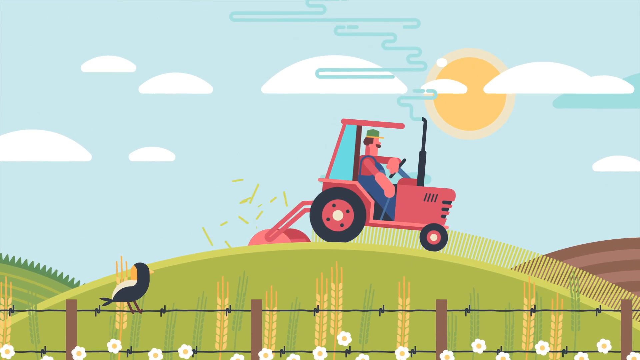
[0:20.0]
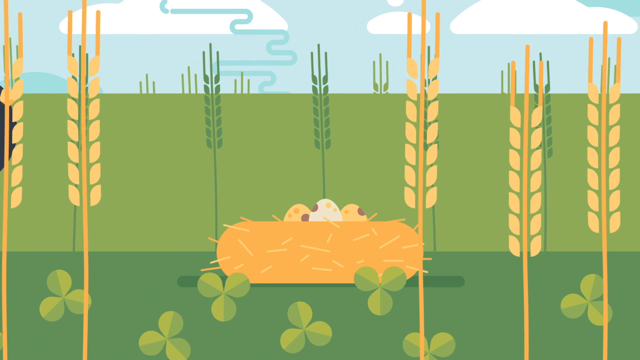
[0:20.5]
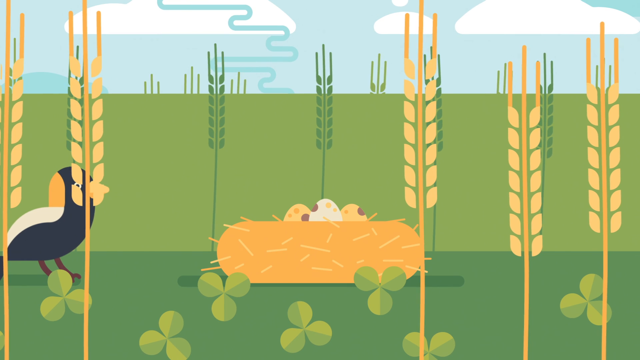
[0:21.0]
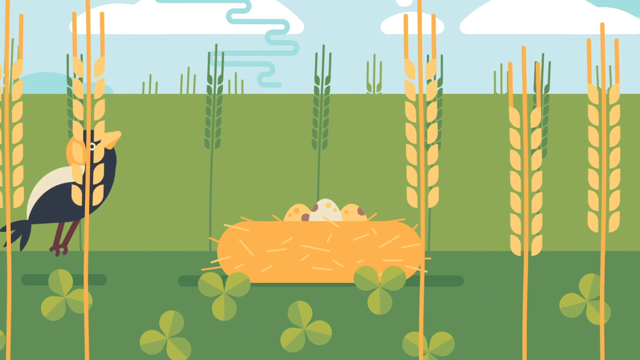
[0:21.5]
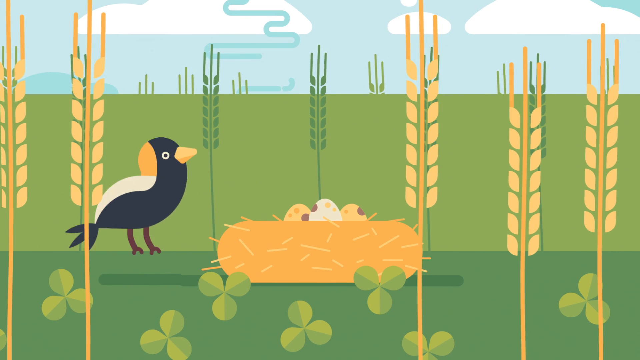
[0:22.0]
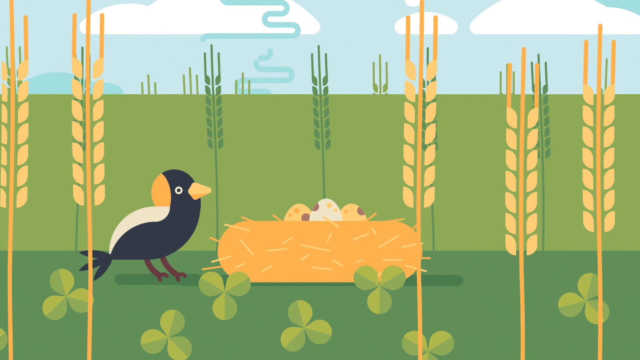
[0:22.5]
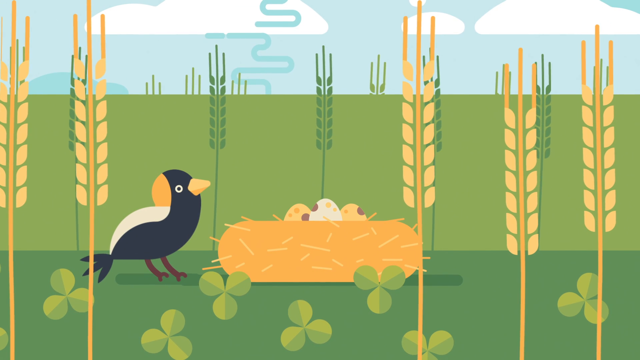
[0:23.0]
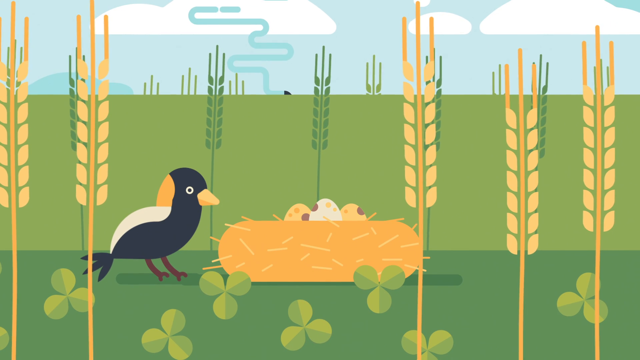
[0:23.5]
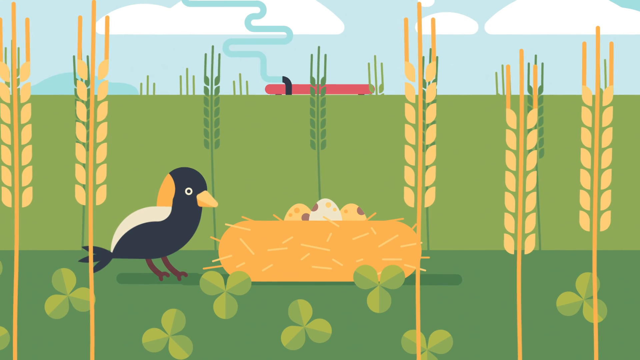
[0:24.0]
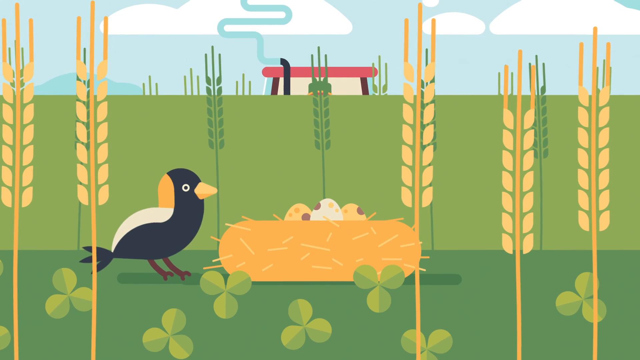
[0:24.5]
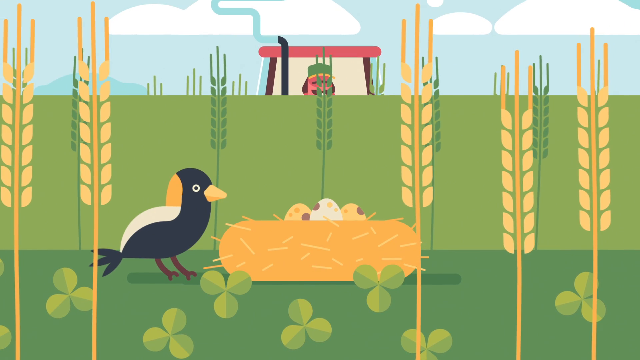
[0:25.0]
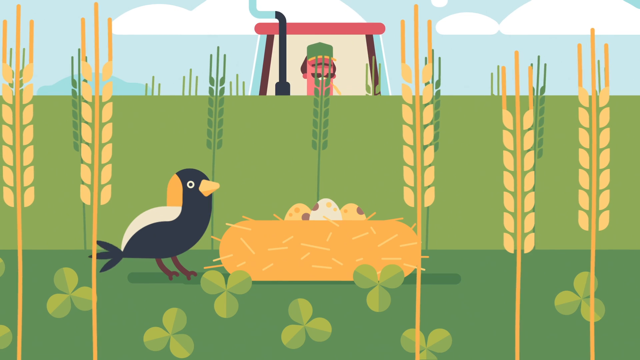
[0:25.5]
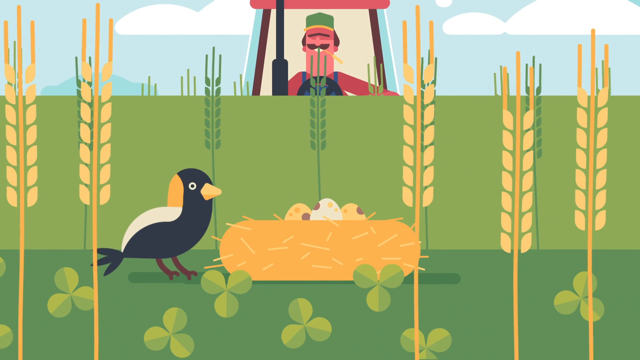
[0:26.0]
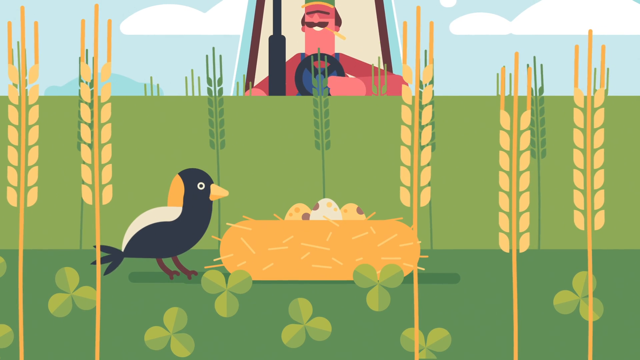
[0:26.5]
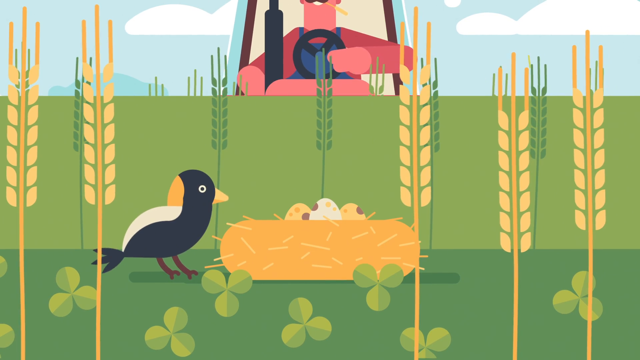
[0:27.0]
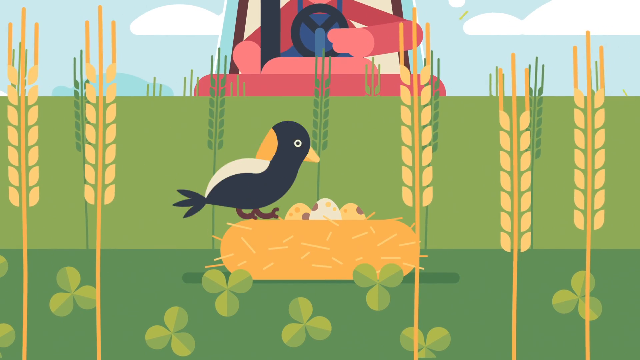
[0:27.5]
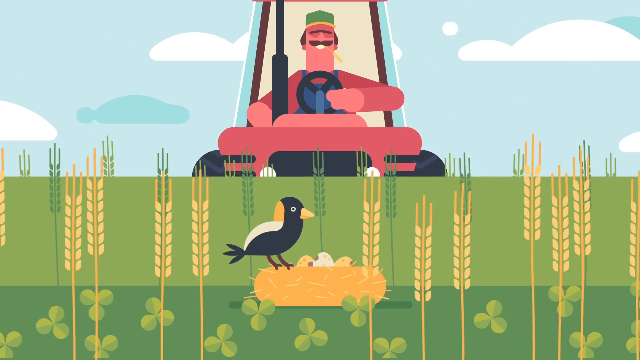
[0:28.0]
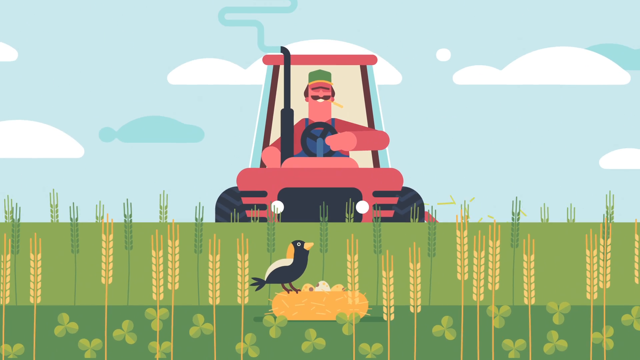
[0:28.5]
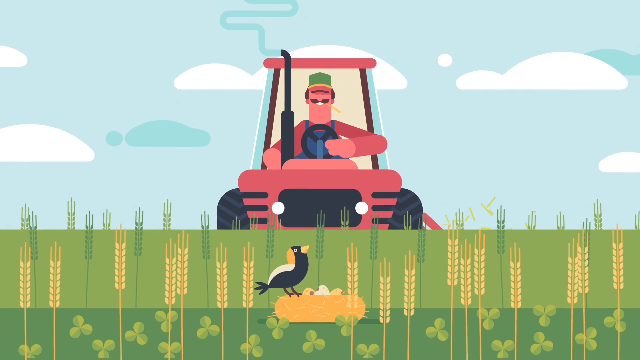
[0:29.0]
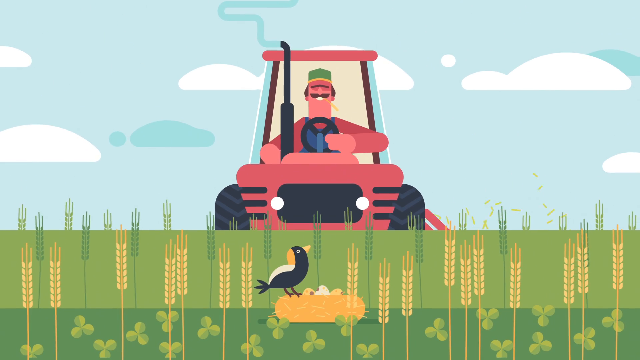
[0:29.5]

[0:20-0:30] On a summer day, a farmer on a red tractor on top of a hill cuts down tall grass to make hay. There is a tall grass wheat field and some clover, and a bird hops into the scene, in the path of the farmer mowing the tall grass. There is a nest of three spotted eggs: two are a golden color and one is a pale white color, and all have spots that are yellow, dark yellow, and brown. The bird is concerned as the farmer gets ready to mow down its nest, so it hops on top of it.